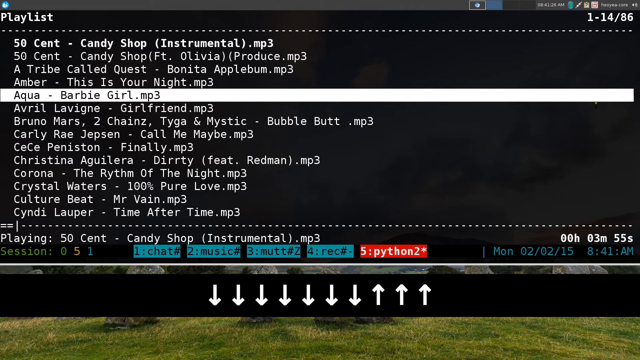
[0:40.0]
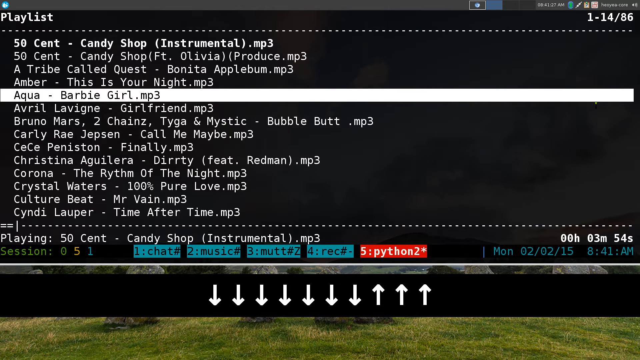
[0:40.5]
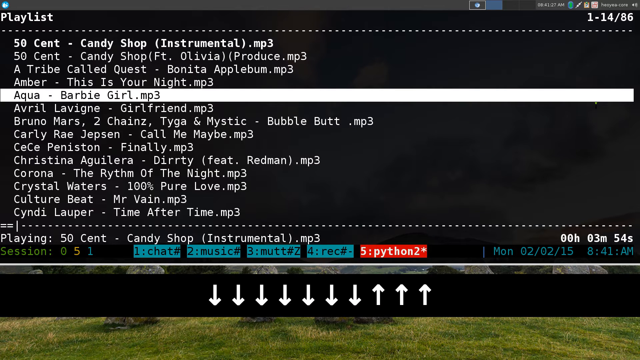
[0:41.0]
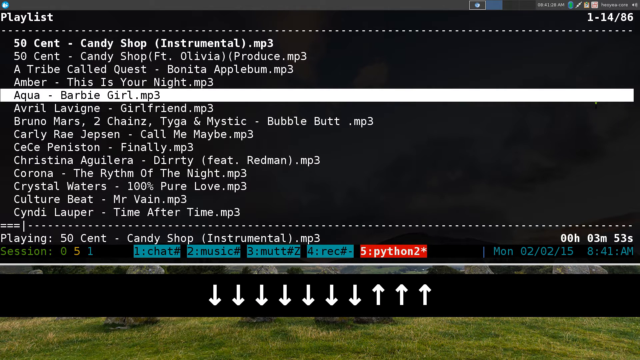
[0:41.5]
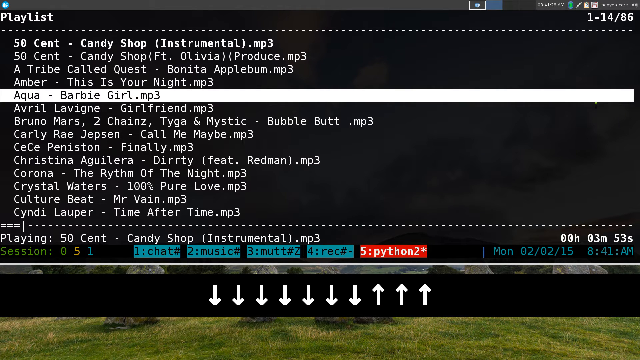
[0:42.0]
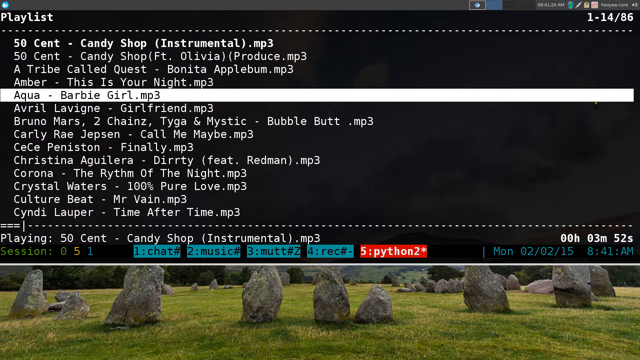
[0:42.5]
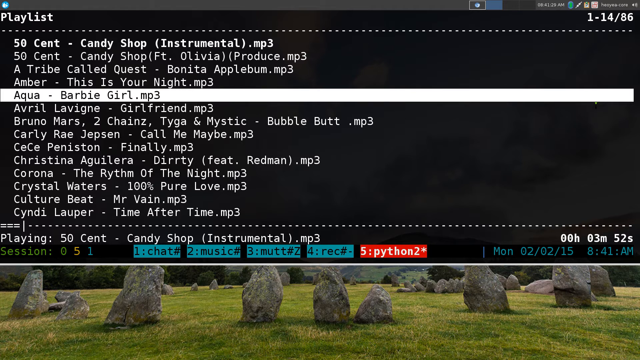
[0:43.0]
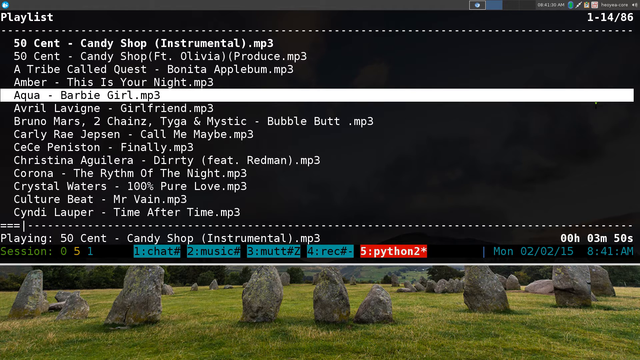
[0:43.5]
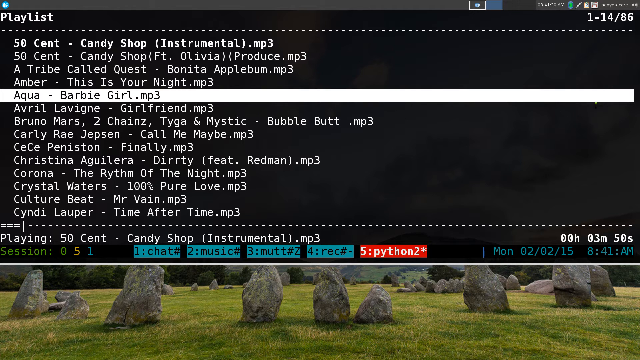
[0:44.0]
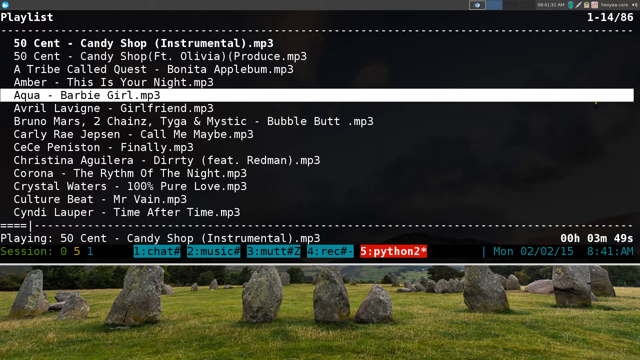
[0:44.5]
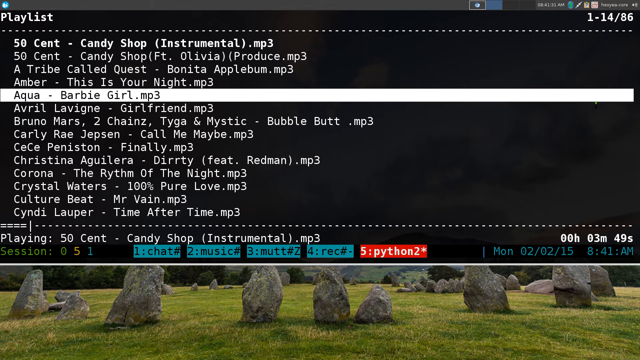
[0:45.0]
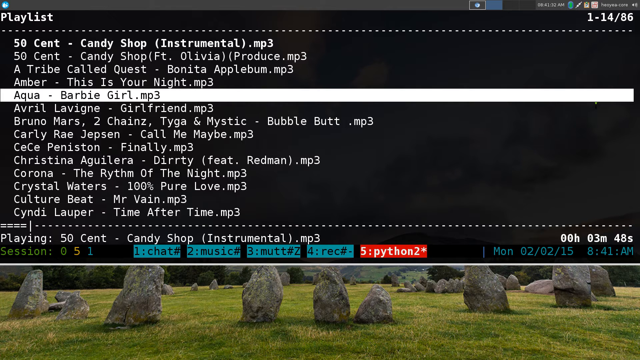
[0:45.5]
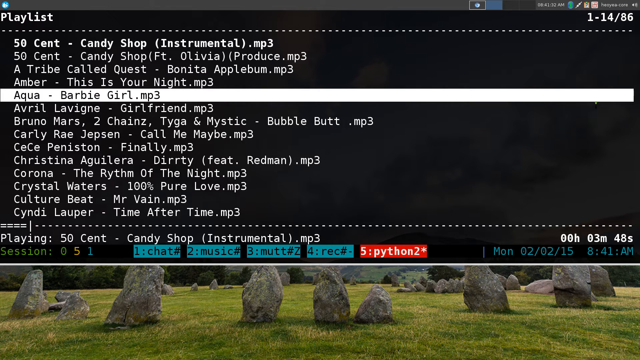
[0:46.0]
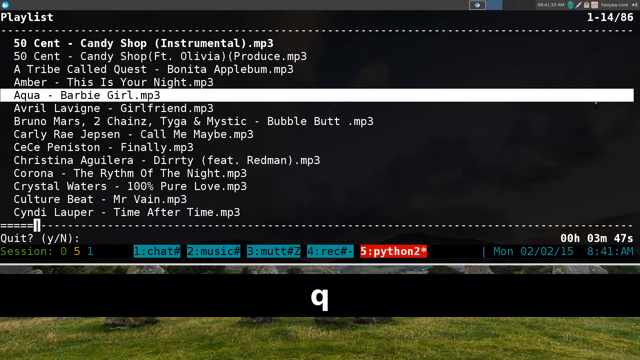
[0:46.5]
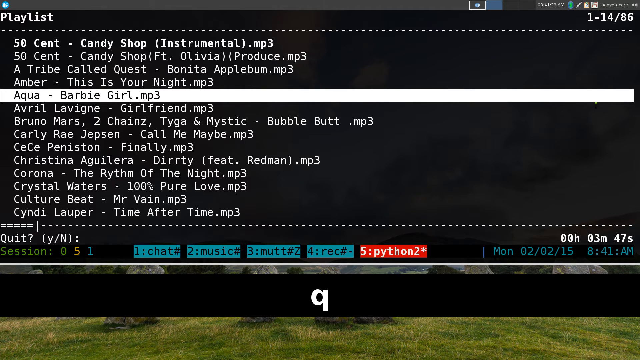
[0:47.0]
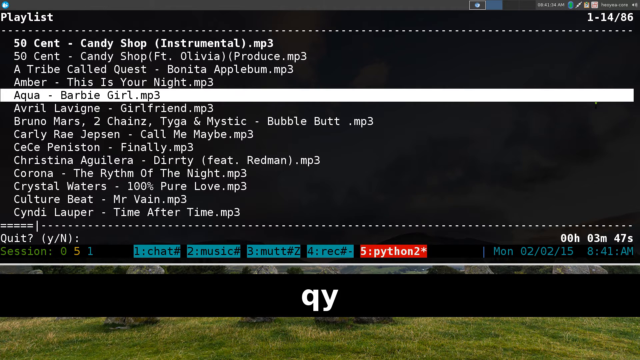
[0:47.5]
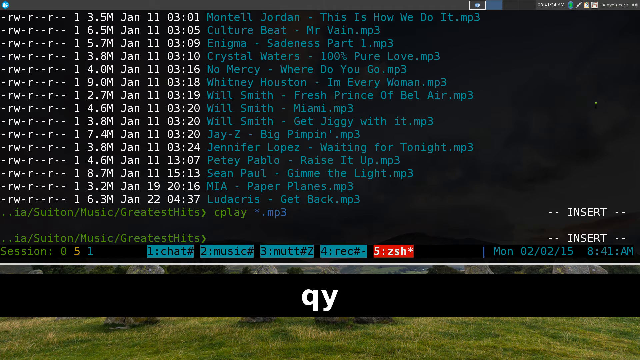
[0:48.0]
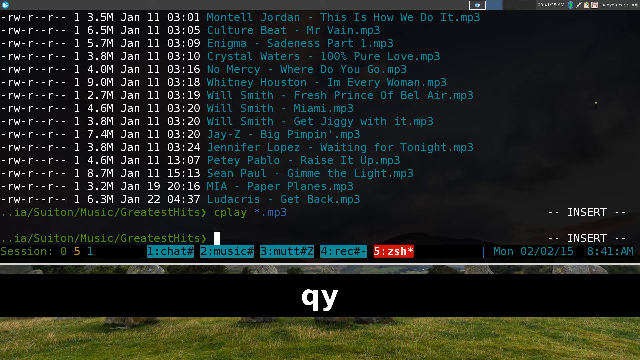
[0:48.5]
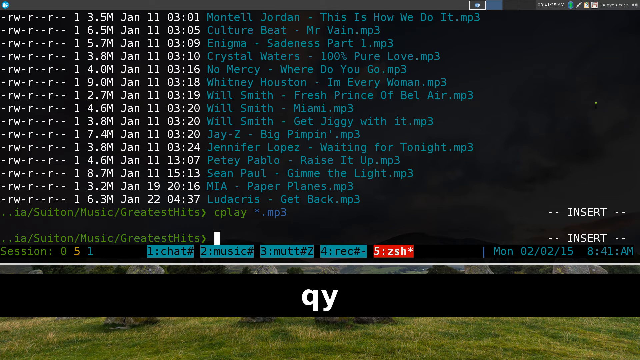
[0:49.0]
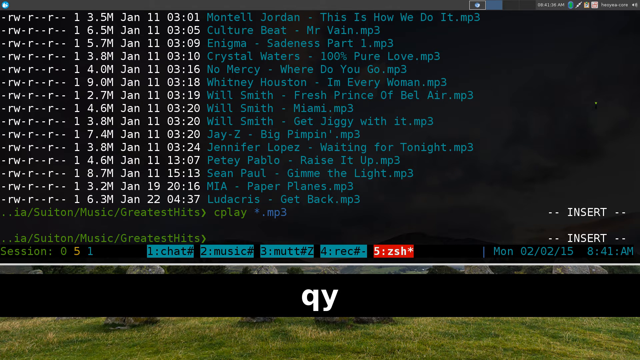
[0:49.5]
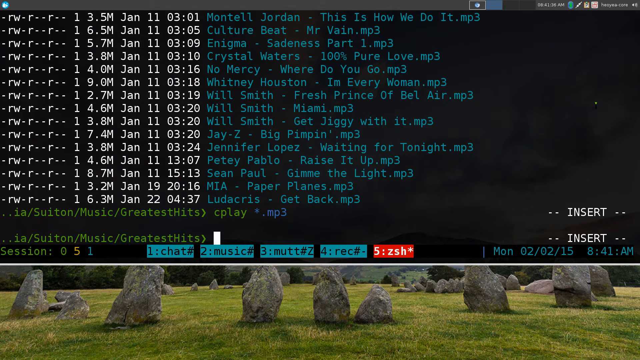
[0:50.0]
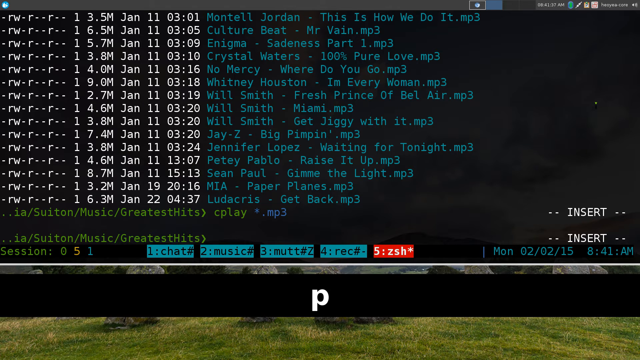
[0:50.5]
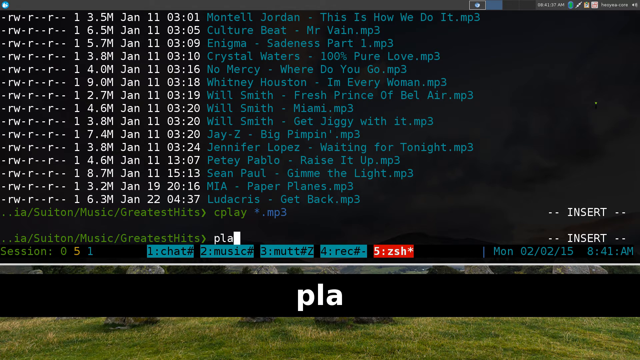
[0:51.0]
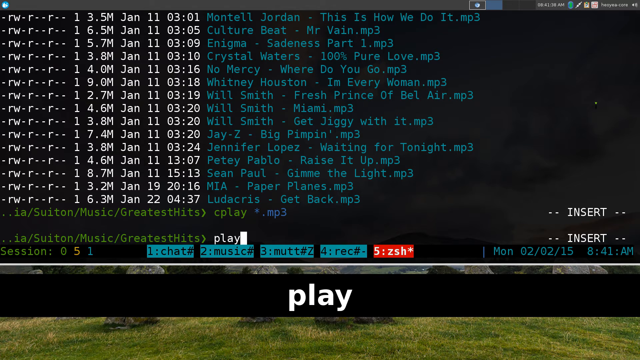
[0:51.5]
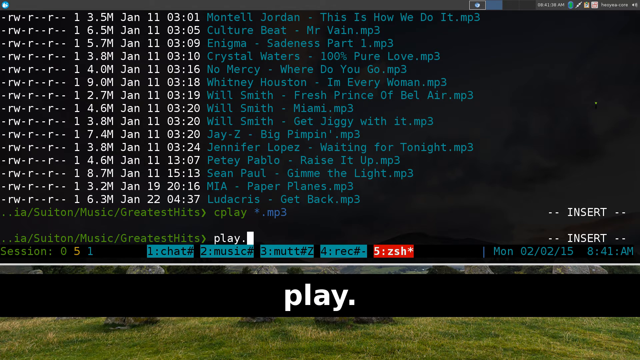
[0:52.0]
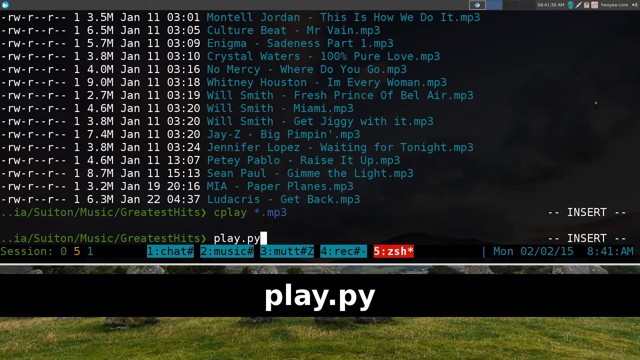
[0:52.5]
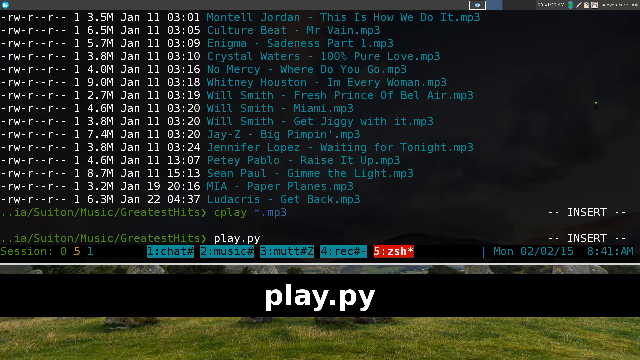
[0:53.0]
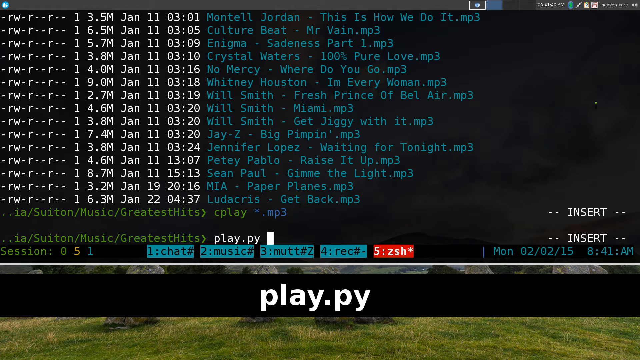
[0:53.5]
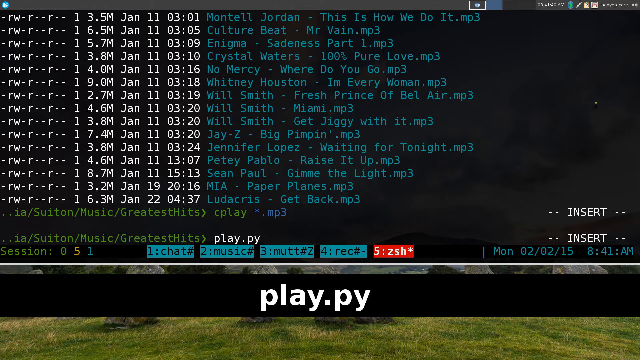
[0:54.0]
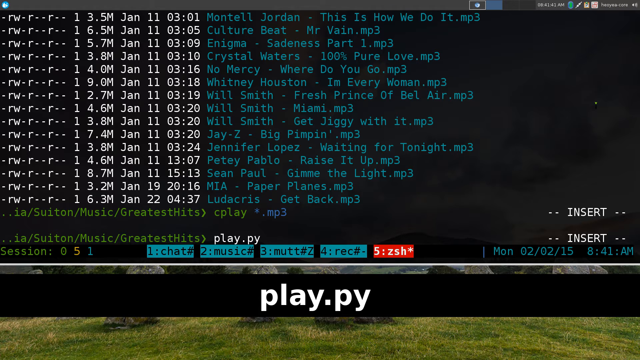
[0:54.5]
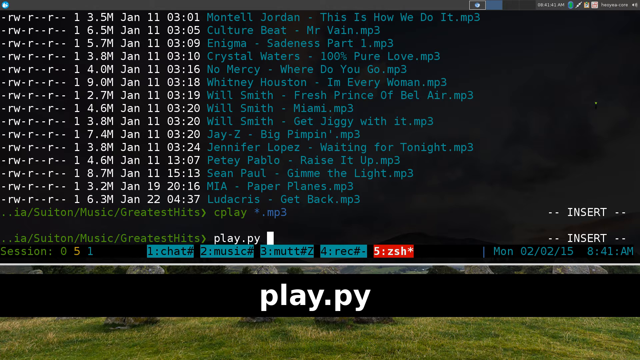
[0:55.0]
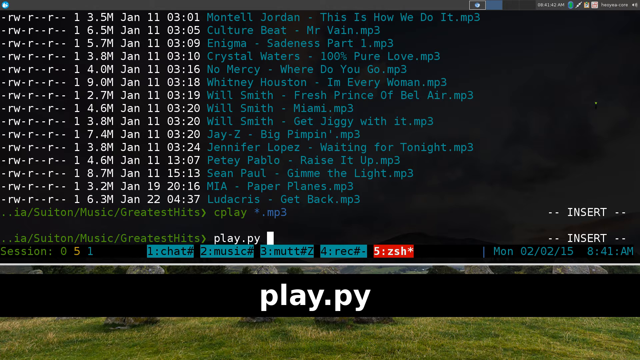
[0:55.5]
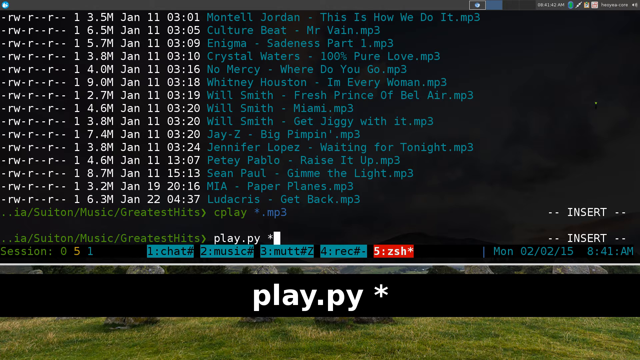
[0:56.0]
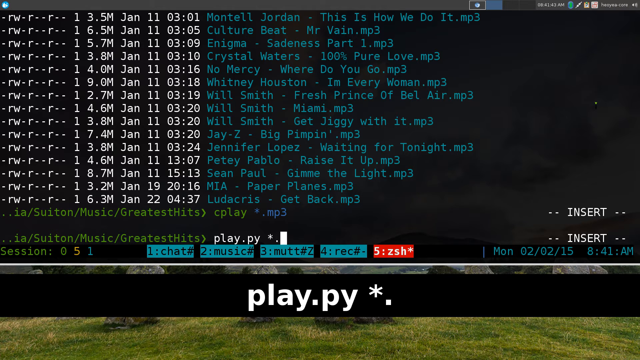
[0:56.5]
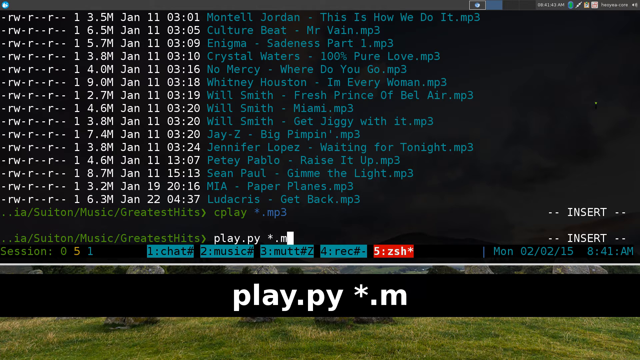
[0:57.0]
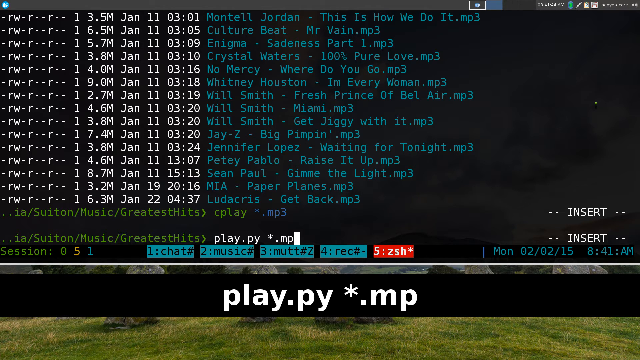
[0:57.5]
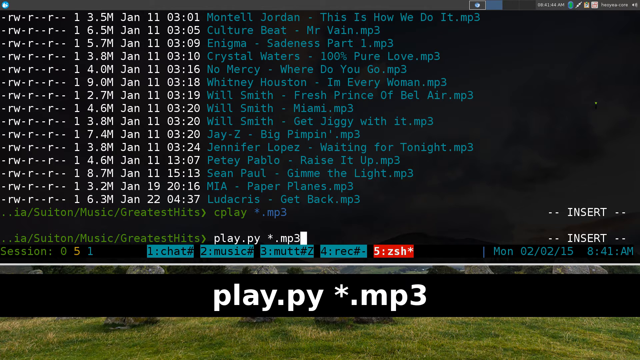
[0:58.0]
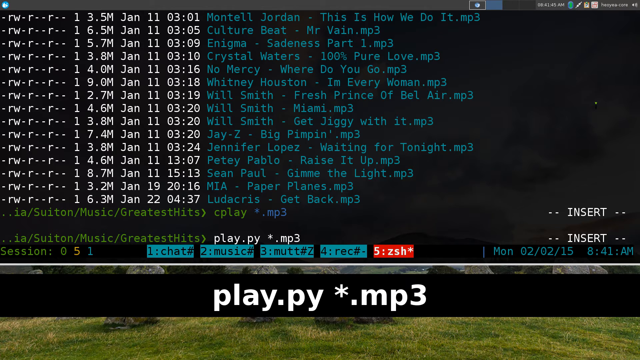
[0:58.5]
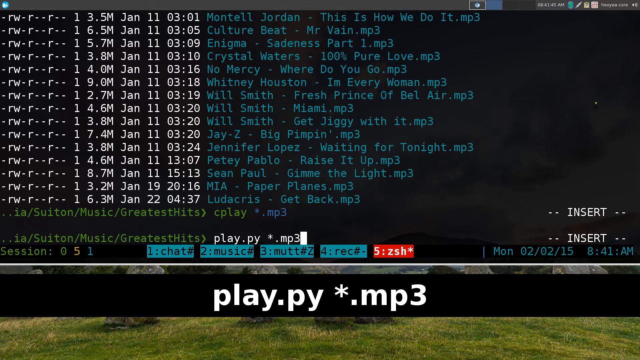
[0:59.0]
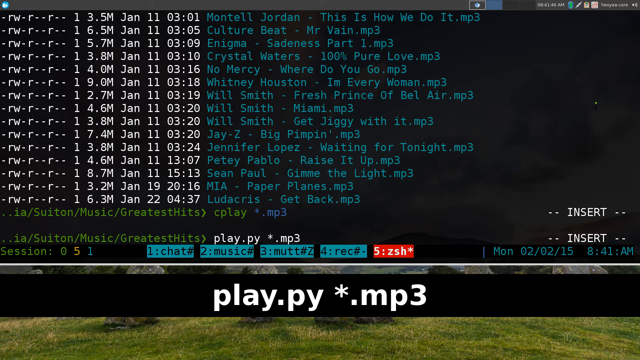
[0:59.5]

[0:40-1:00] After scrolling up and down with the keyboard numerous times, the user lets the 50 cent candy shop instrumental play for a few moments; the countdown timer in the lower right corner slowly goes down and the playbar slowly fills, showing that the song is playing. A quit option appears with Y or N highlighted. The user presses Q and Y on the keyboard to quit the player and is brought back to the initial terminal page showing the list of mp3 songs with their dates and sizes. The time reads 8.41 a.m. The user then begins typing play.py followed by *.mp3, apparently to run a Python script that plays all the available mp3 files.